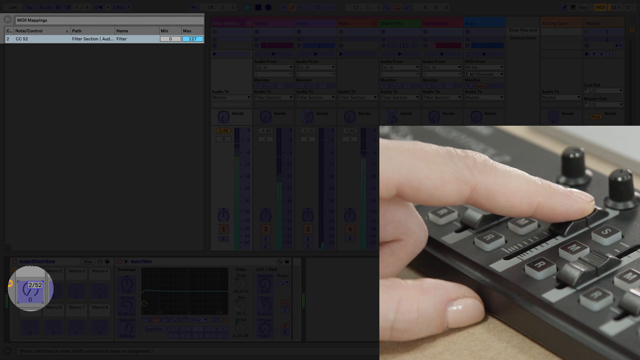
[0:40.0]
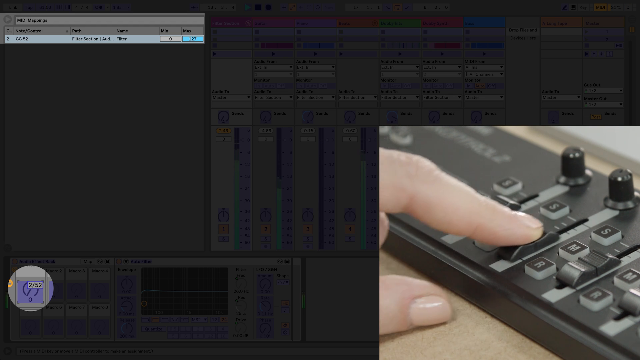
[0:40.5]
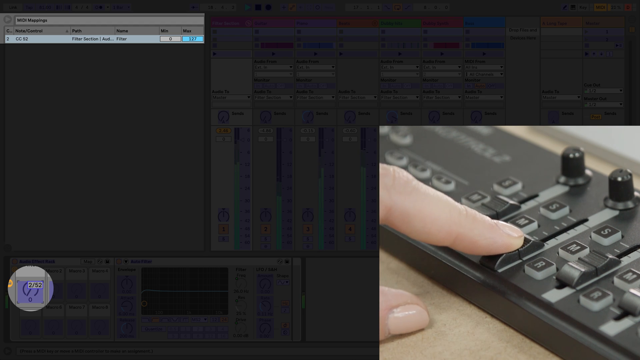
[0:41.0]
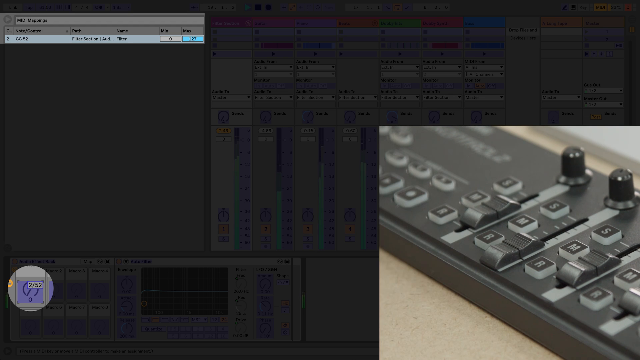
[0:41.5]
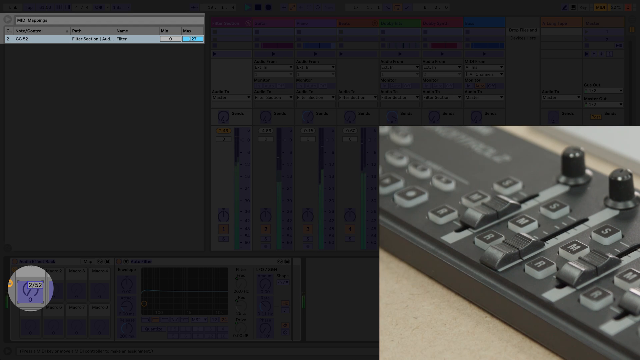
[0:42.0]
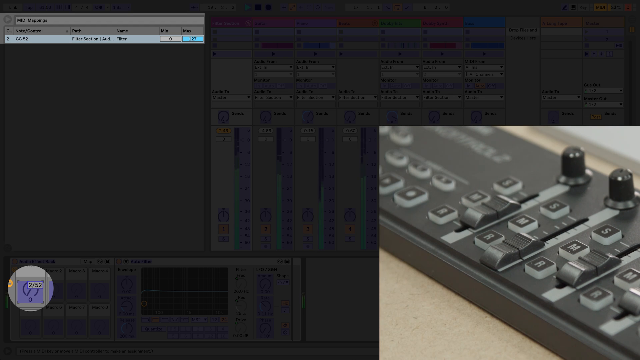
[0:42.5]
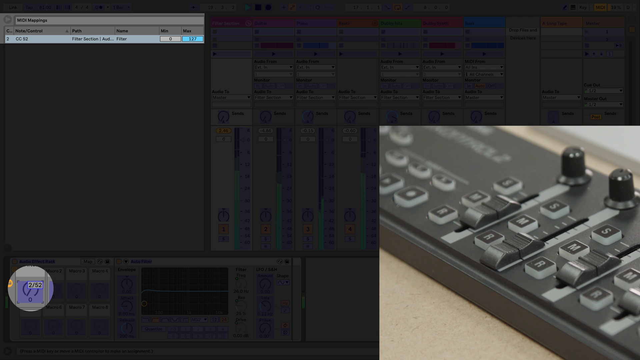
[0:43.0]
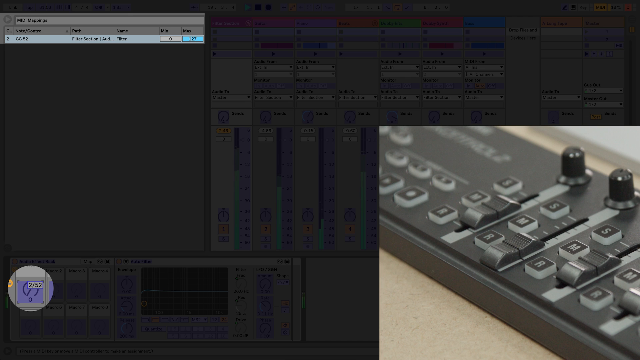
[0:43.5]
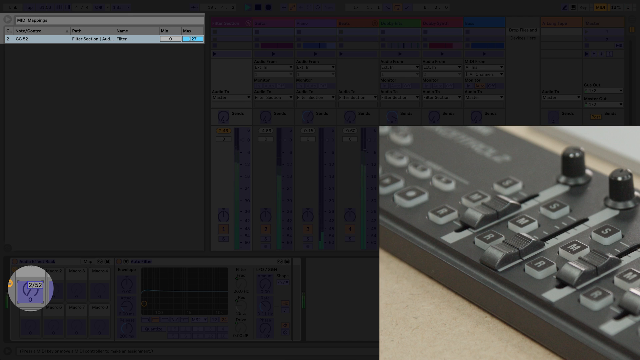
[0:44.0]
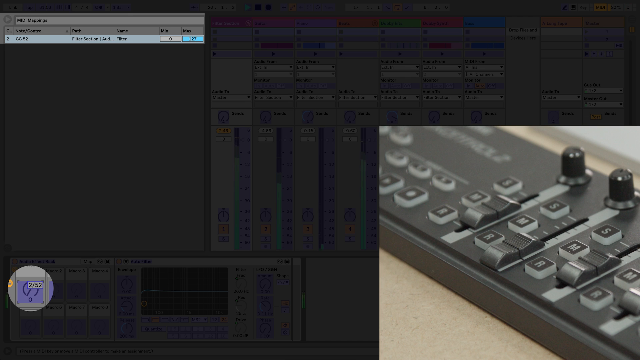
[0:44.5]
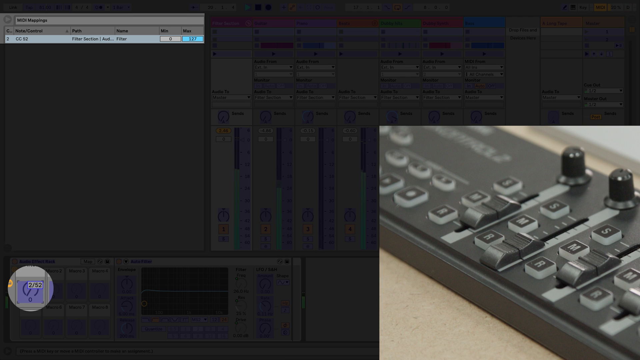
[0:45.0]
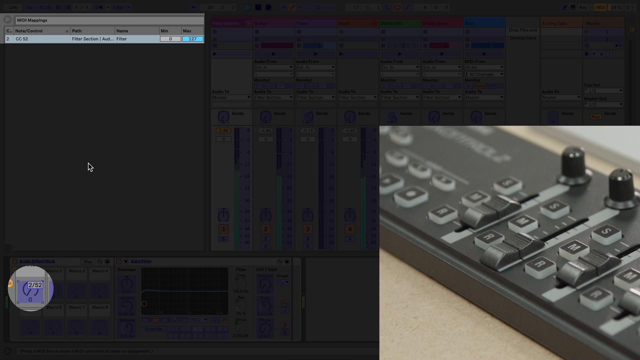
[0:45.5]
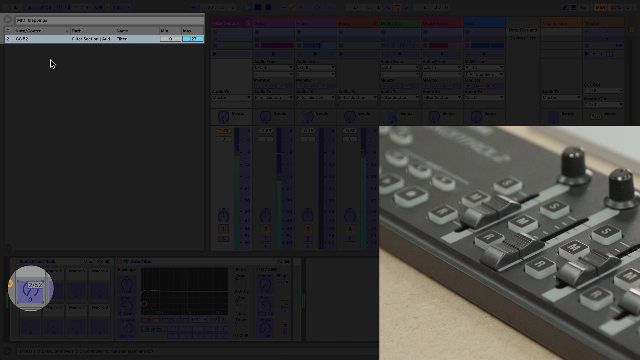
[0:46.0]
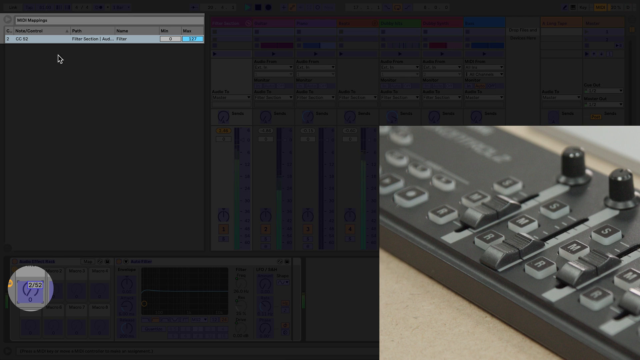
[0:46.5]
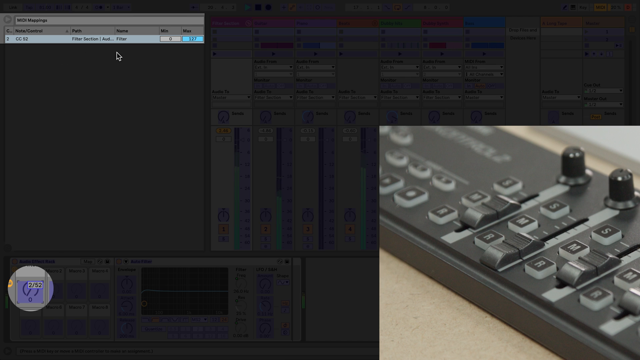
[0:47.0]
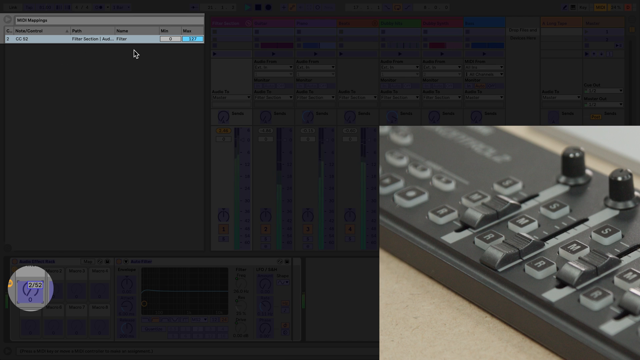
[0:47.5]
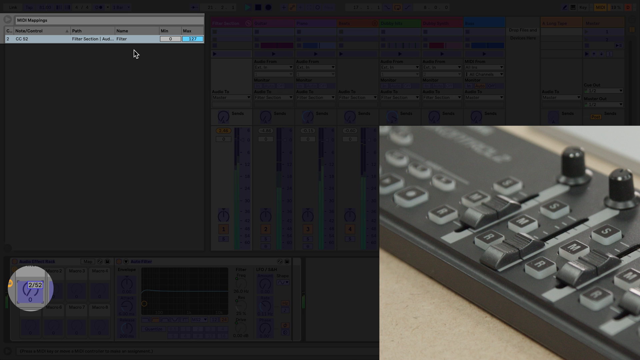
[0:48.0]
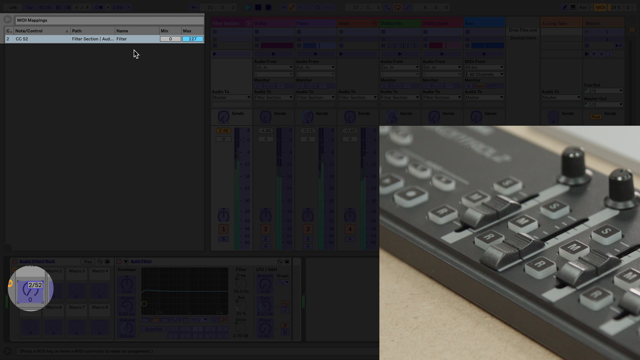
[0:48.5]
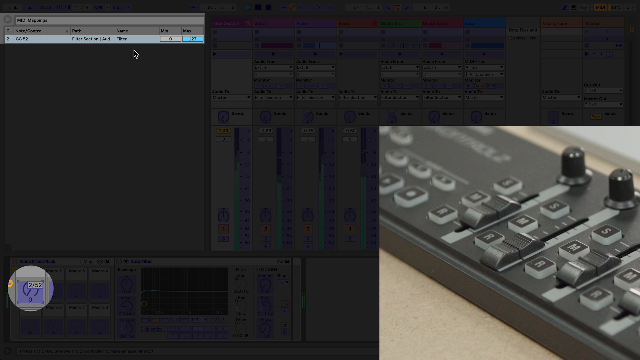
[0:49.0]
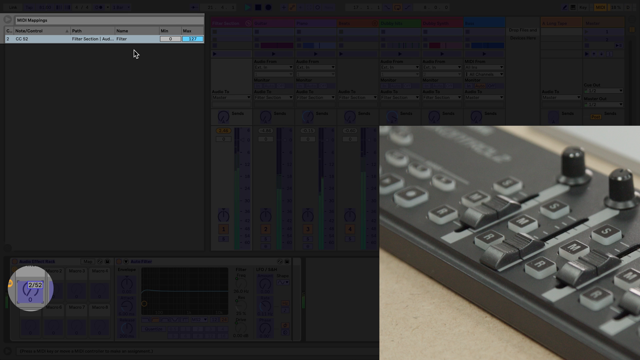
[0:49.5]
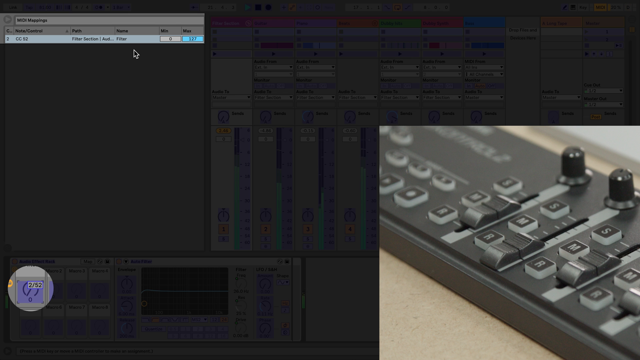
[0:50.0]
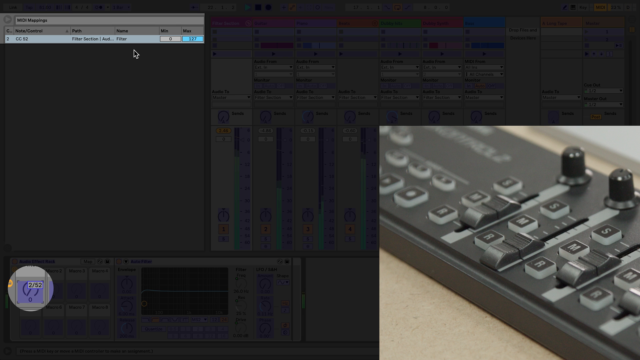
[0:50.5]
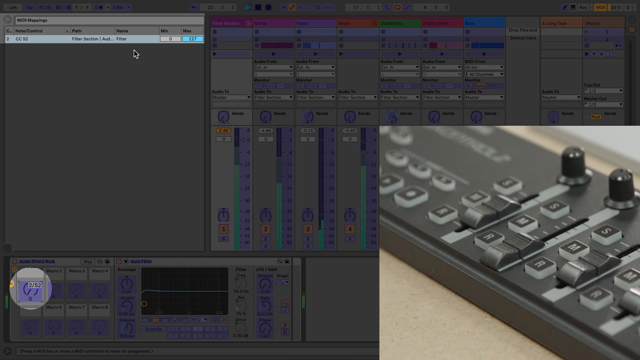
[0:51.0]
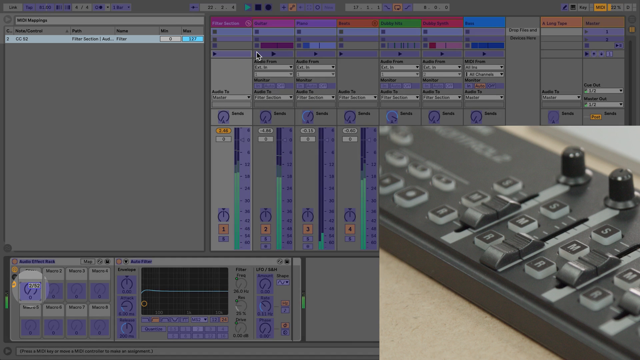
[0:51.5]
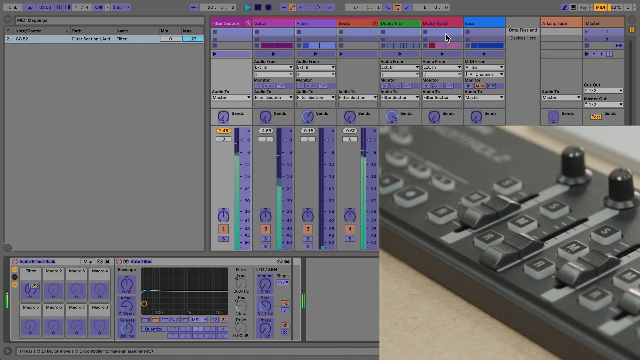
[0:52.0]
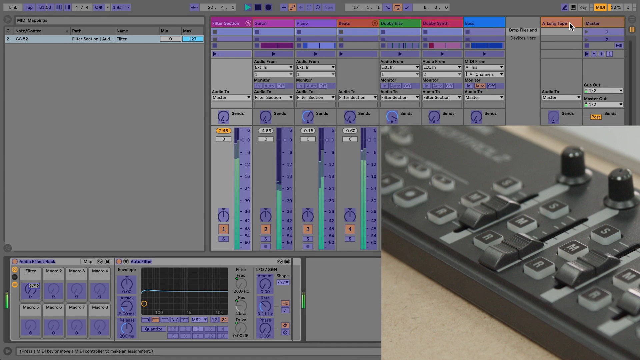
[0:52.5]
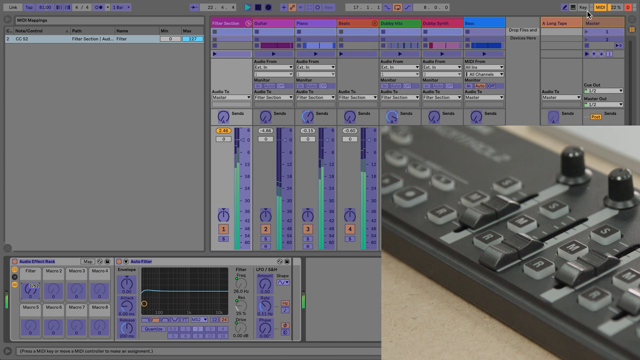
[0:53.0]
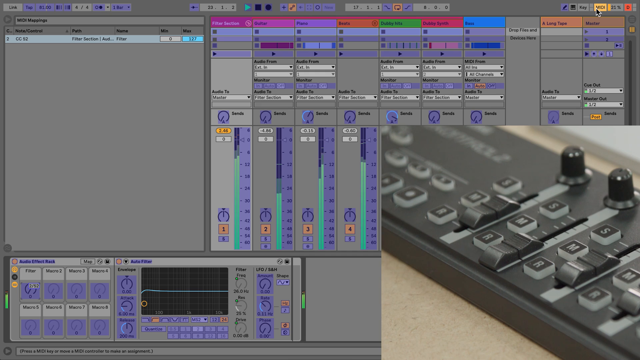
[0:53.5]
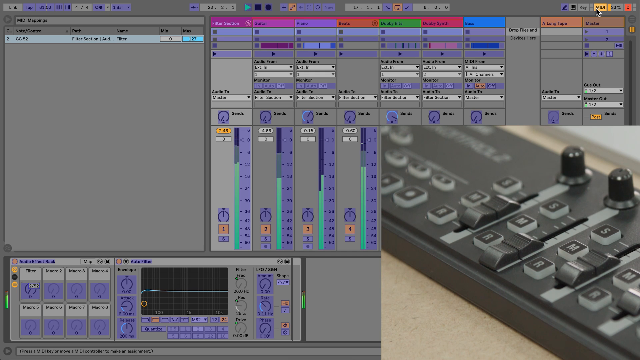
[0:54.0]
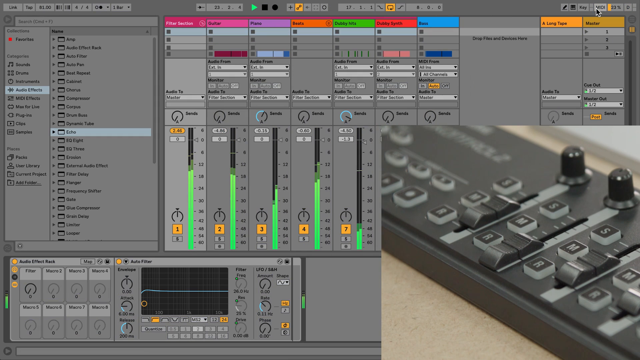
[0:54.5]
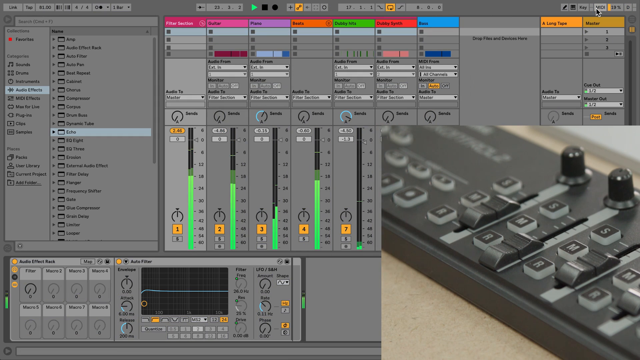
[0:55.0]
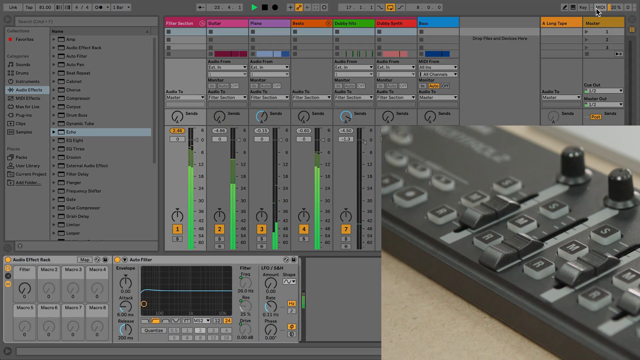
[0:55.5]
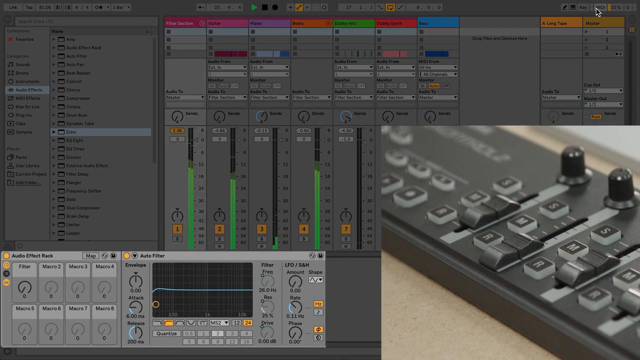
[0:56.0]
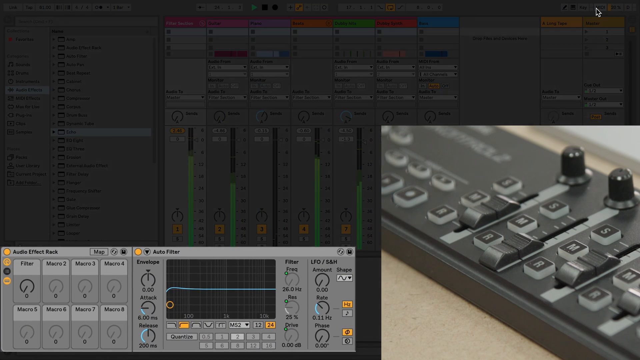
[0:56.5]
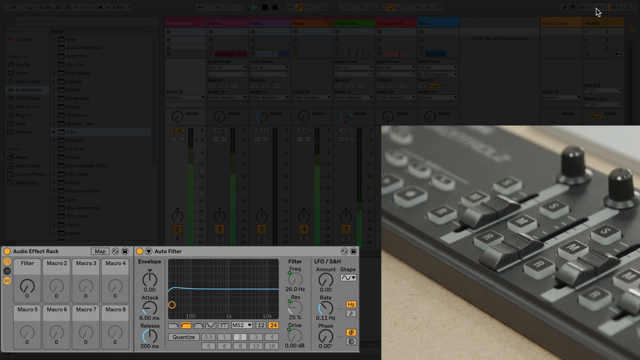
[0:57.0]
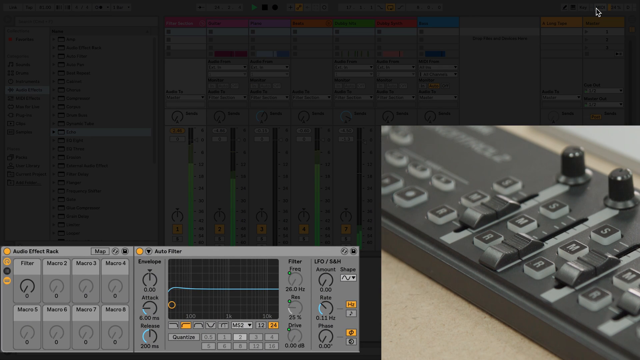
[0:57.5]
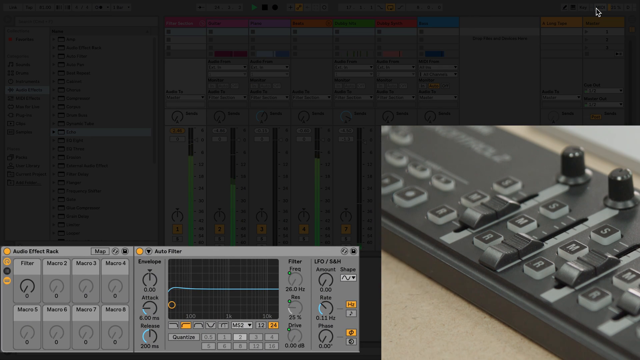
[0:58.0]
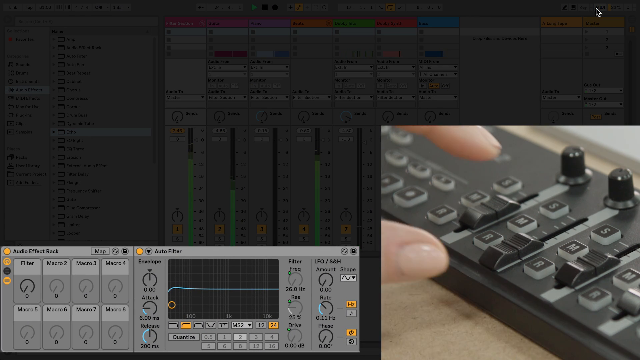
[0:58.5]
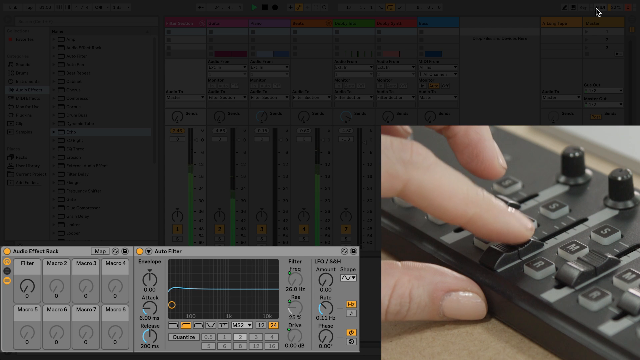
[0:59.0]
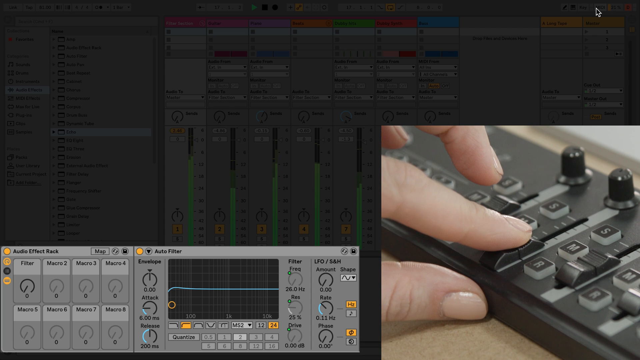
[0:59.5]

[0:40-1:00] A screenshot of the music mixing application is grayed out to highlight a lever button on the lower left portion of the screen, drawing attention to a gain button. On the right side of the screen is a MIDI machine with multiple buttons, levers and dials. A hand appears, with the forefinger and thumb visible; the forefinger pushes one of the levers from low to high and then back down. The screen then lights up again, and the mouse goes to the MIDI button in the upper right corner again. The screen changes and an audio effect rack appears at the bottom left. The inset video appears again, and the forefinger of the left hand pushes one of the levers from down to up and then back down again.